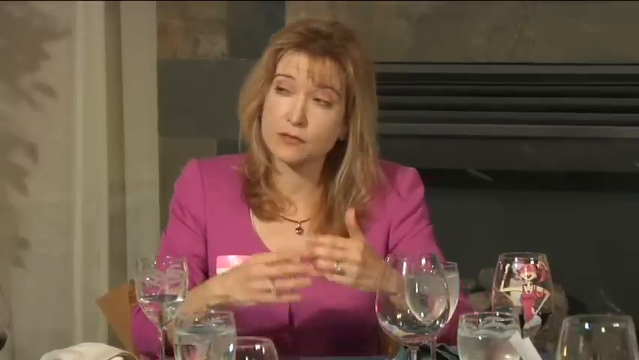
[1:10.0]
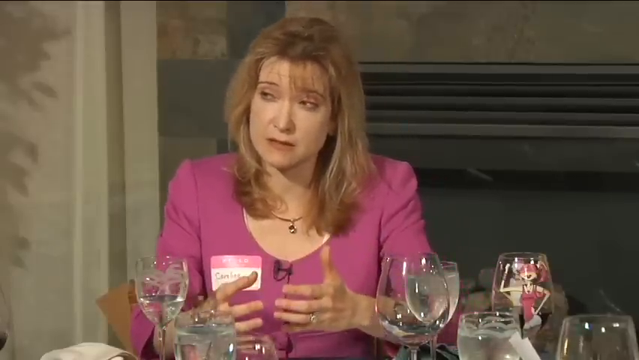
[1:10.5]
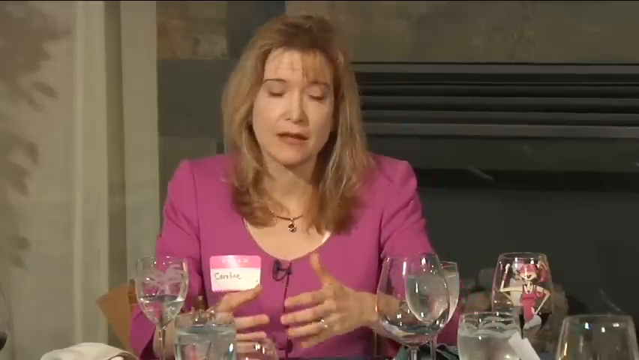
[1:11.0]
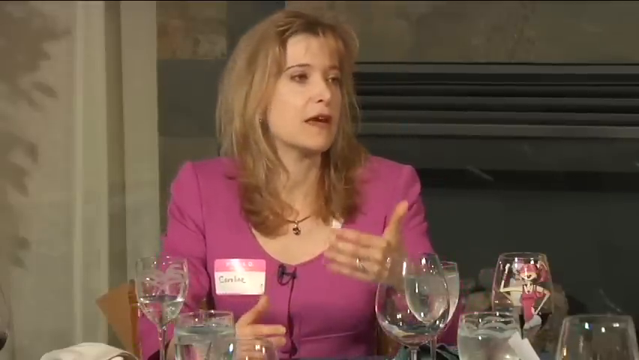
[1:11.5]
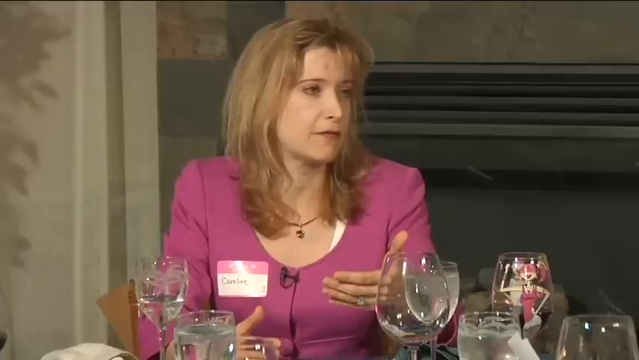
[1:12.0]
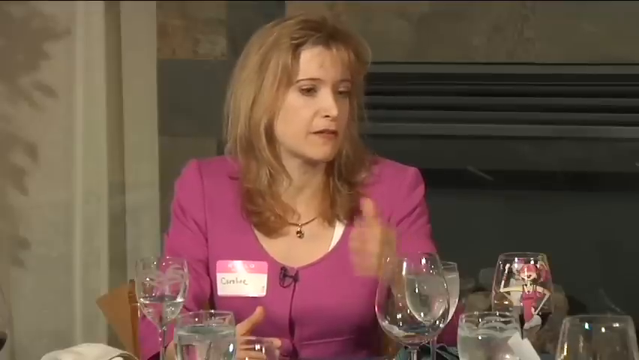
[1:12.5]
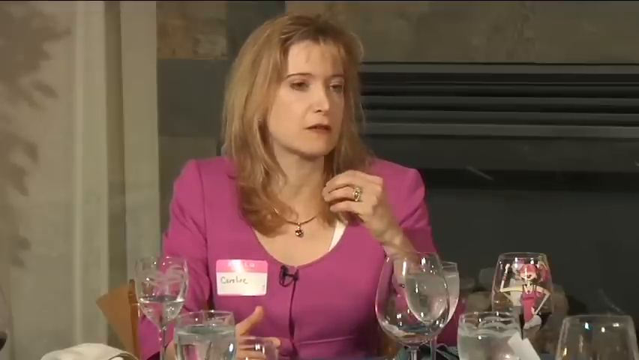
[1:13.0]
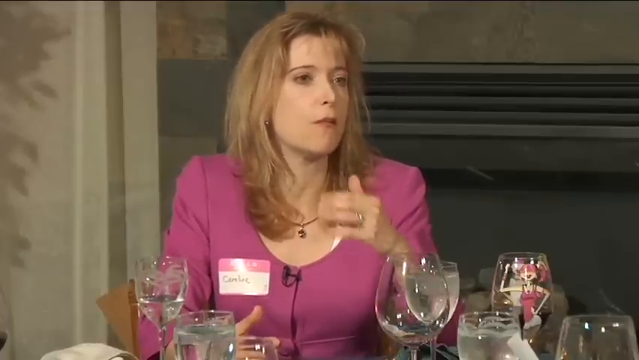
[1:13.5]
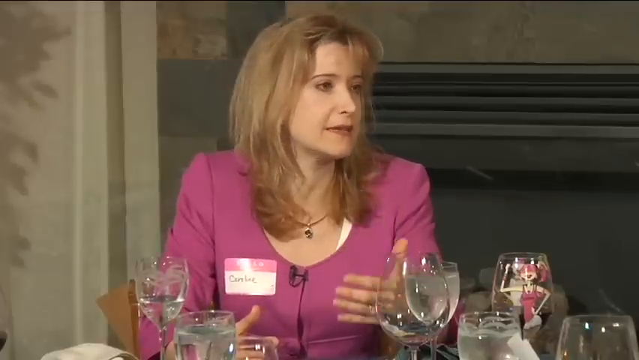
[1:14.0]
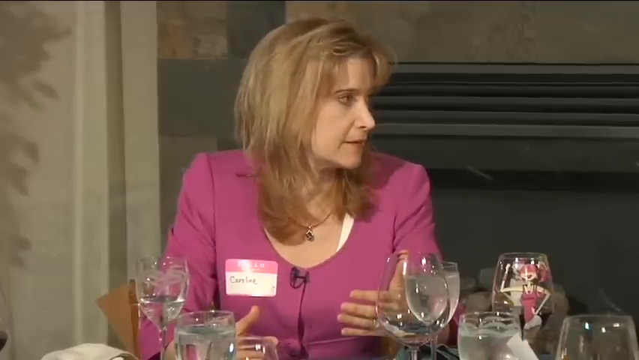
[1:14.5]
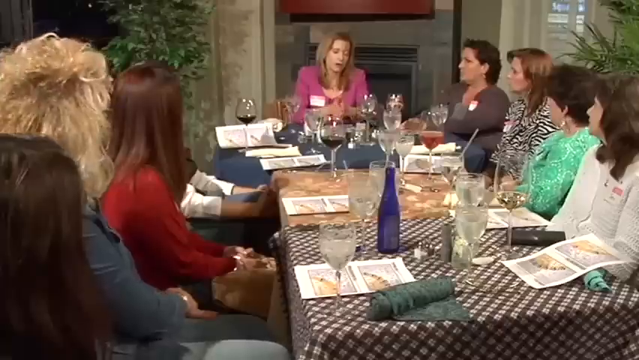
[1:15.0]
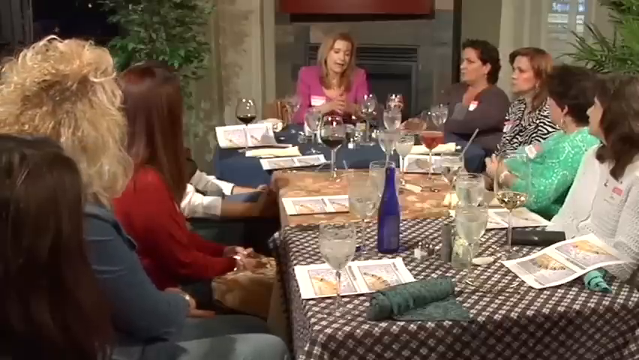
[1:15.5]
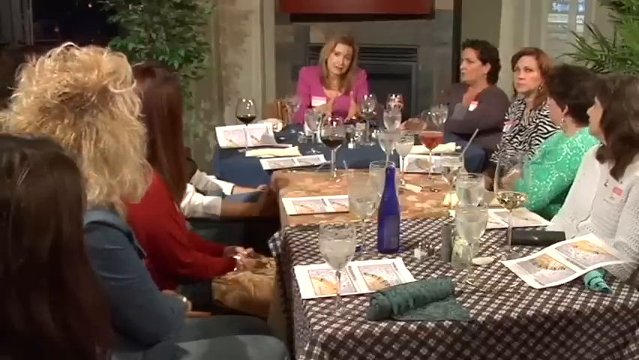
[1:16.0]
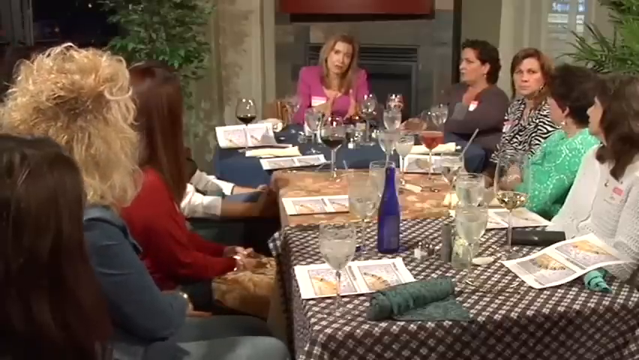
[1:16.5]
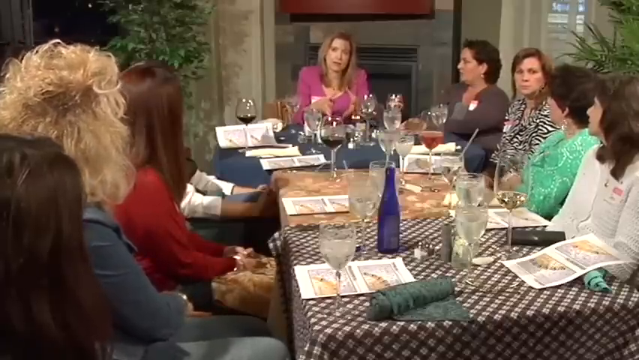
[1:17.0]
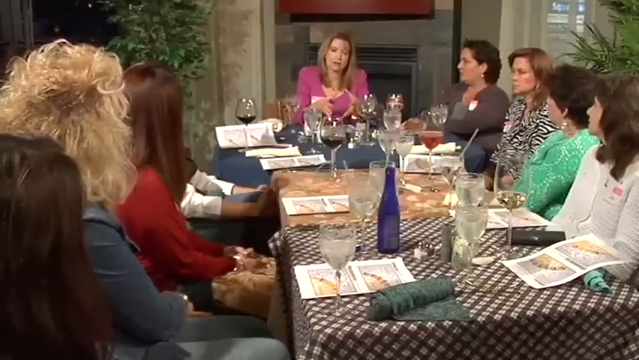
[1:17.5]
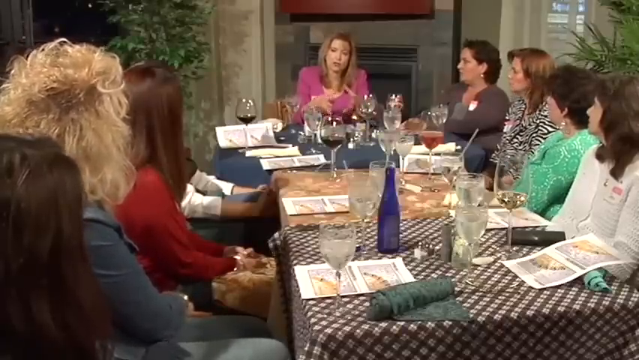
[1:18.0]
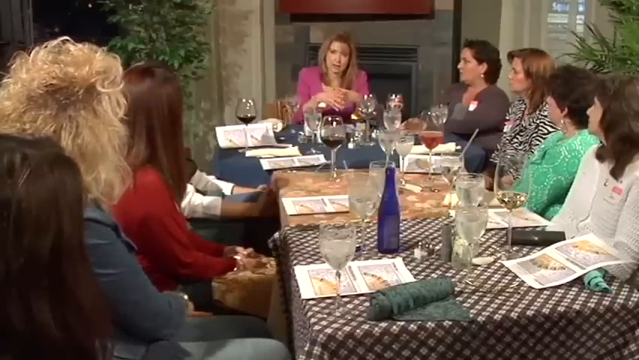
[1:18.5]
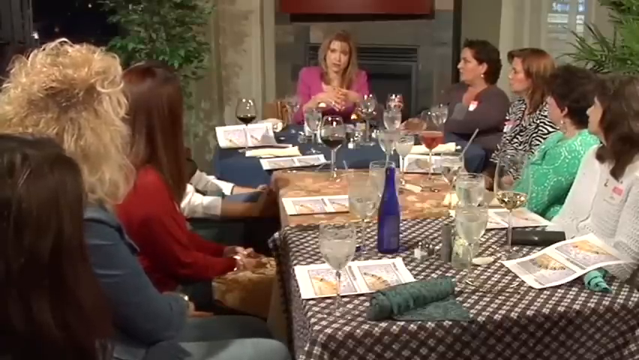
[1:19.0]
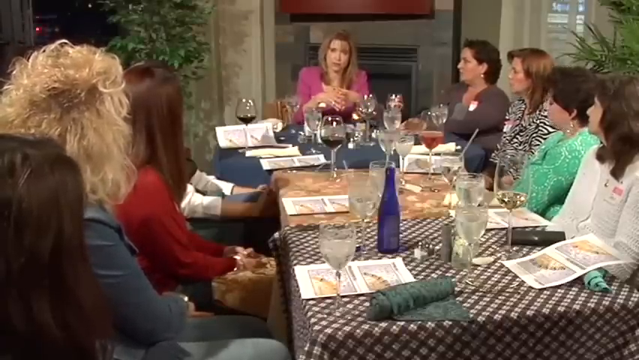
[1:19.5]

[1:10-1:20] A woman sits at the head of a table talking to other people in the room, moving her hands around in front of her body. The shot widens out to show her talking to a group of women sitting around the table. She wears a dark pink top and appears to be heading the meeting. The other women all look toward her, though at one point one of them looks back toward the camera. There are glasses in front of all the women, holding red wine, white wine and water.